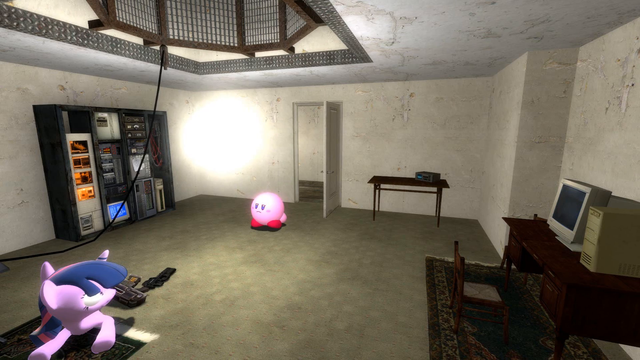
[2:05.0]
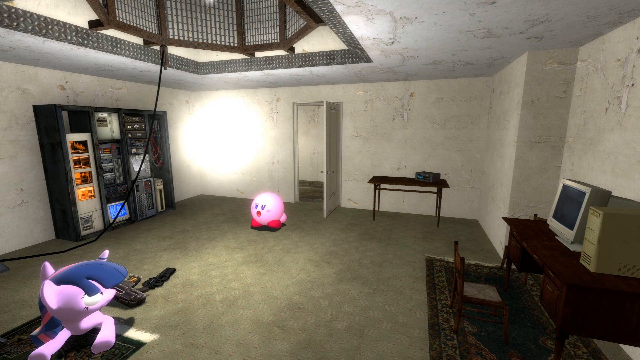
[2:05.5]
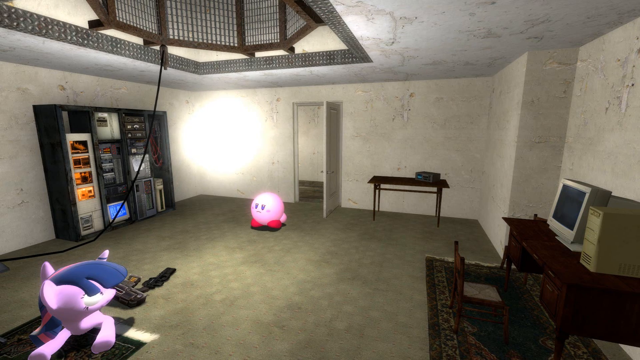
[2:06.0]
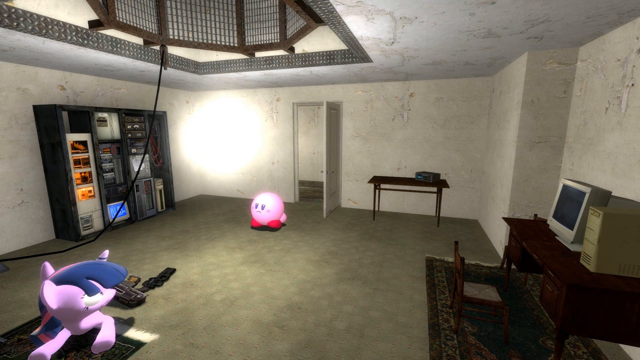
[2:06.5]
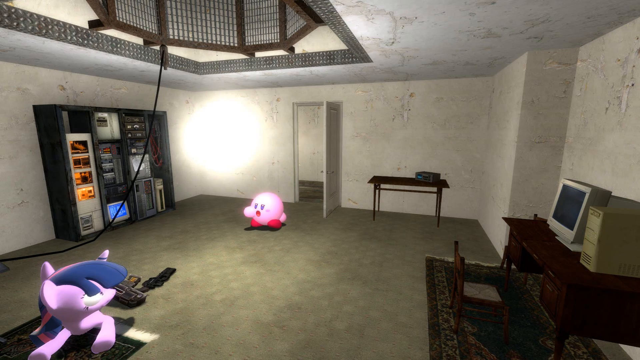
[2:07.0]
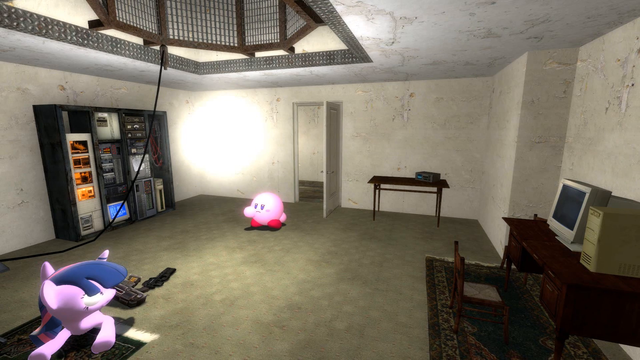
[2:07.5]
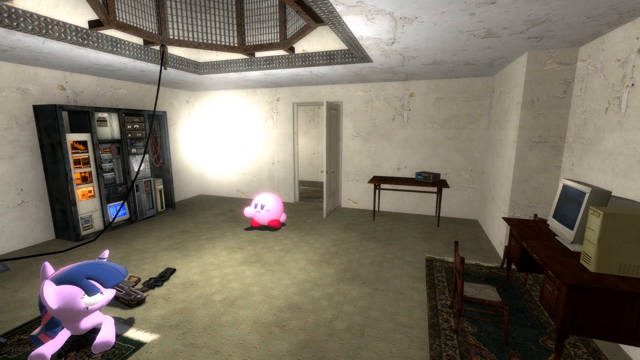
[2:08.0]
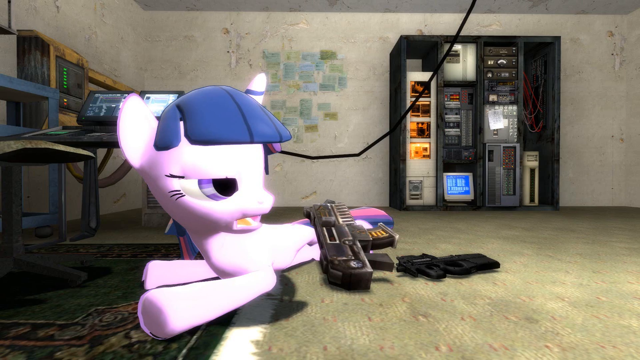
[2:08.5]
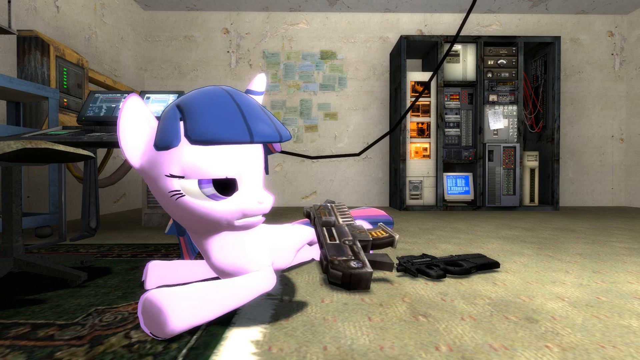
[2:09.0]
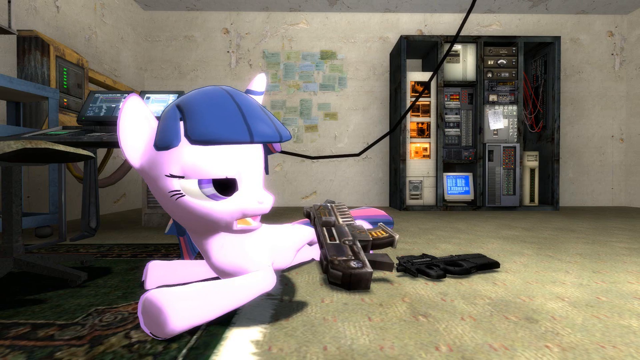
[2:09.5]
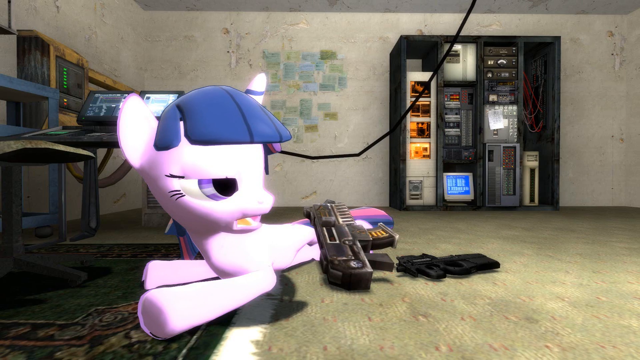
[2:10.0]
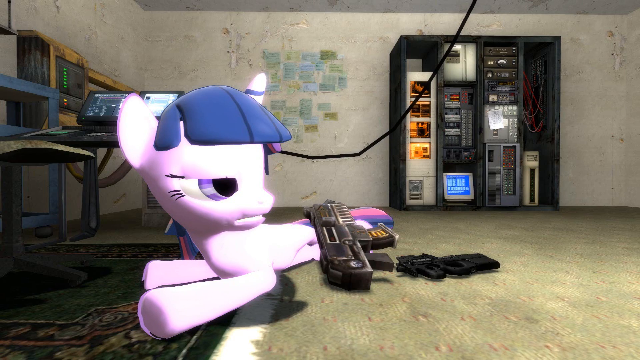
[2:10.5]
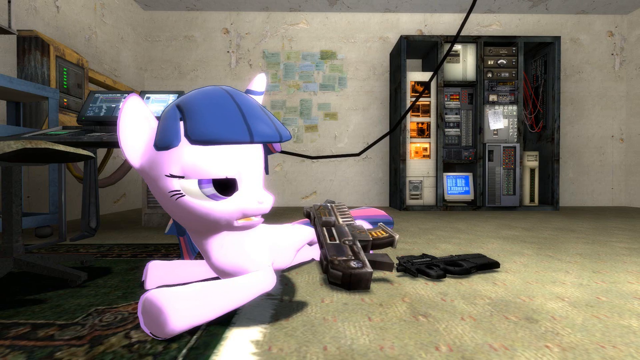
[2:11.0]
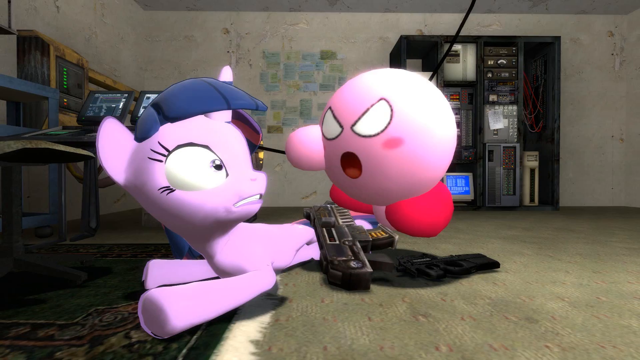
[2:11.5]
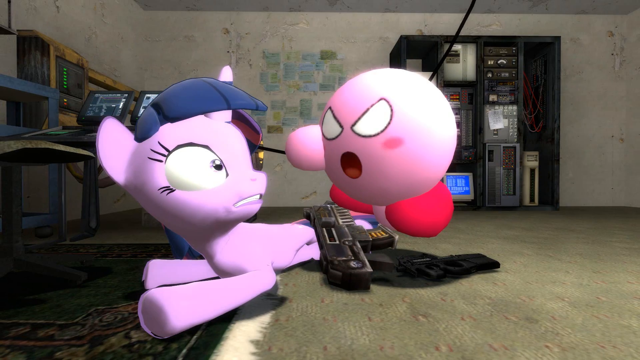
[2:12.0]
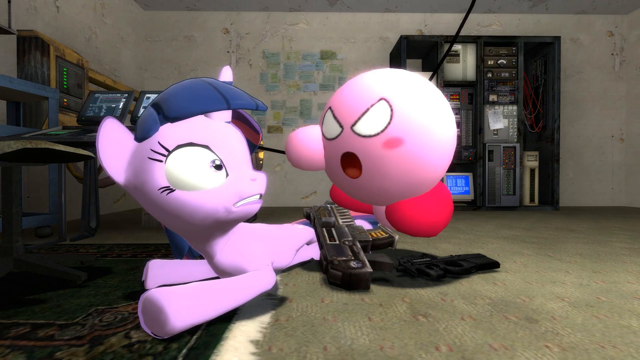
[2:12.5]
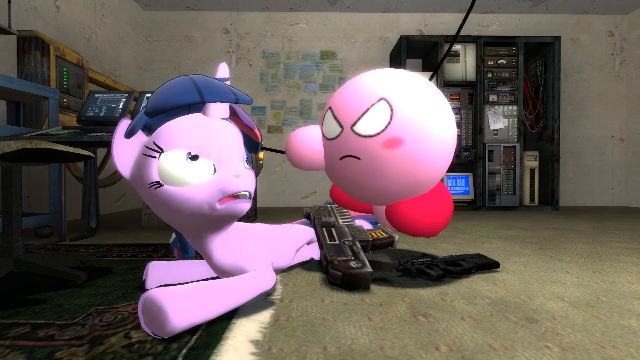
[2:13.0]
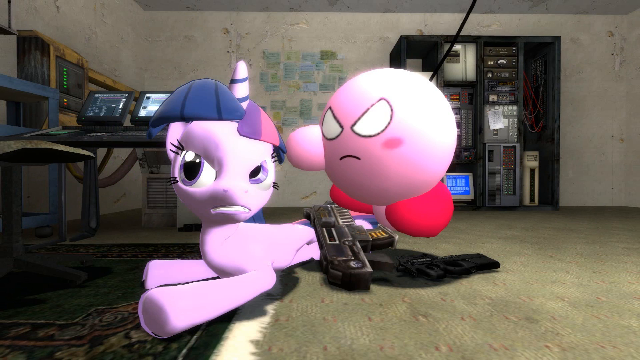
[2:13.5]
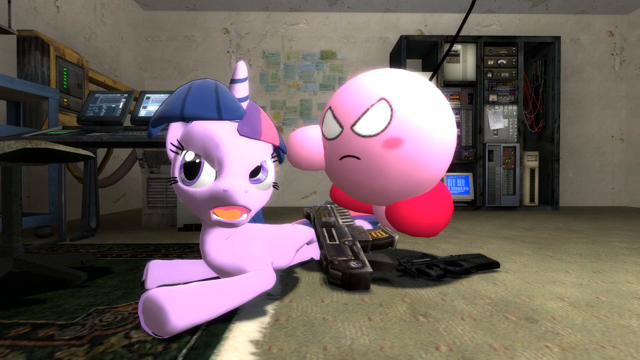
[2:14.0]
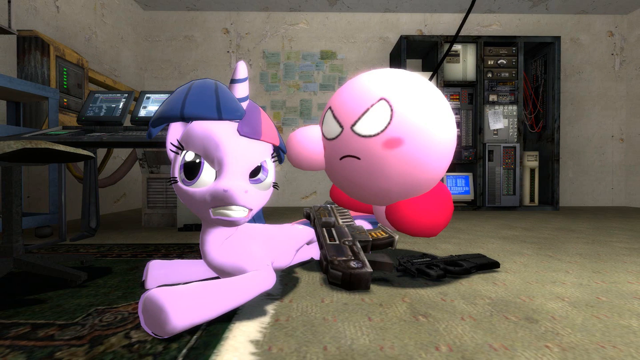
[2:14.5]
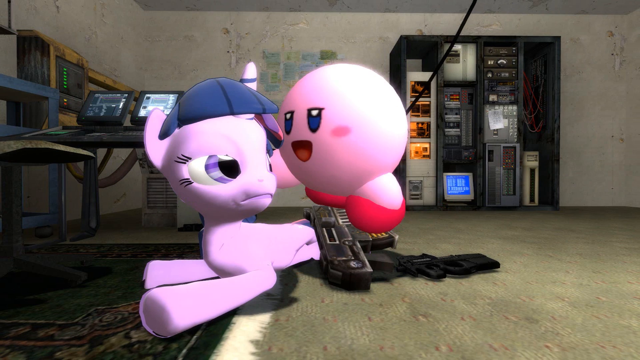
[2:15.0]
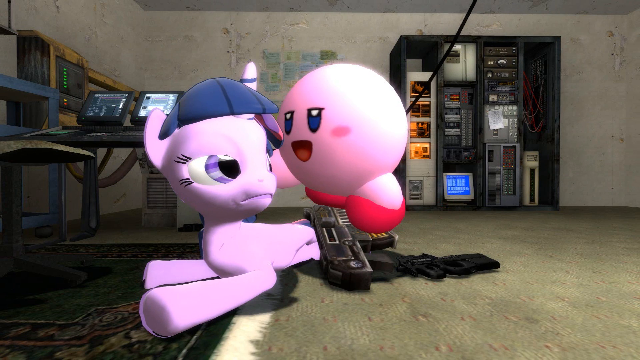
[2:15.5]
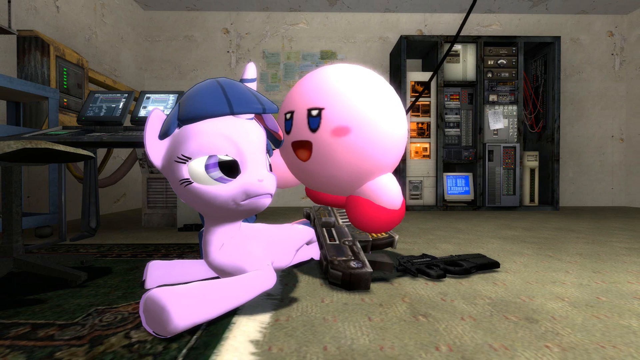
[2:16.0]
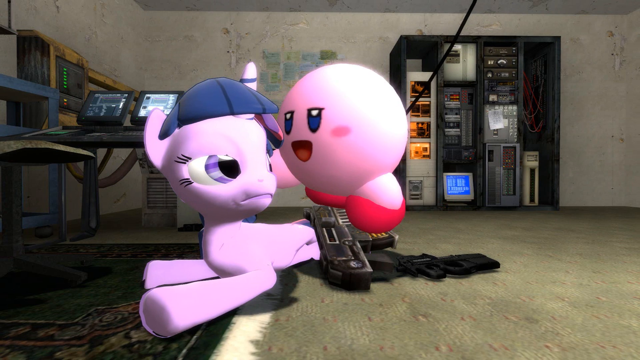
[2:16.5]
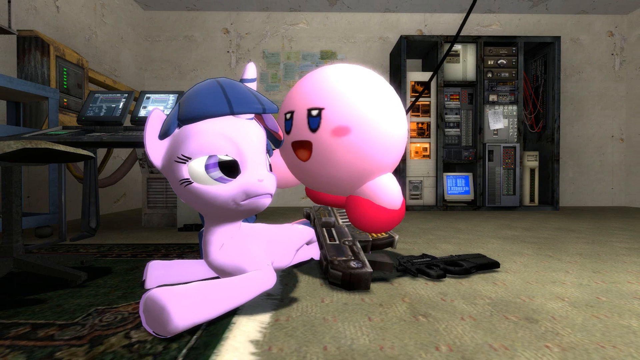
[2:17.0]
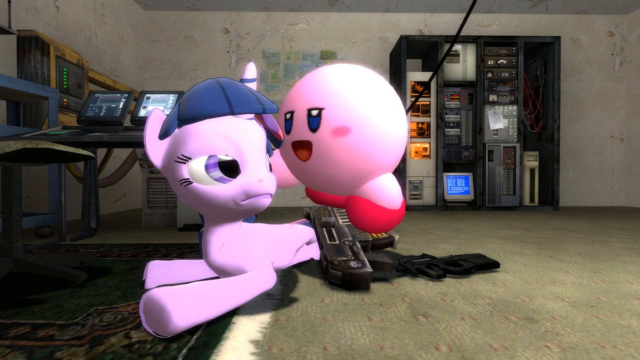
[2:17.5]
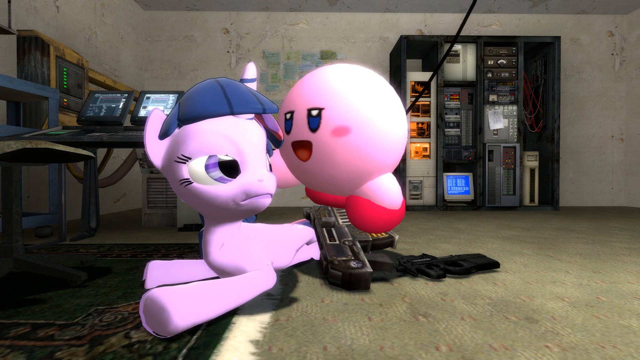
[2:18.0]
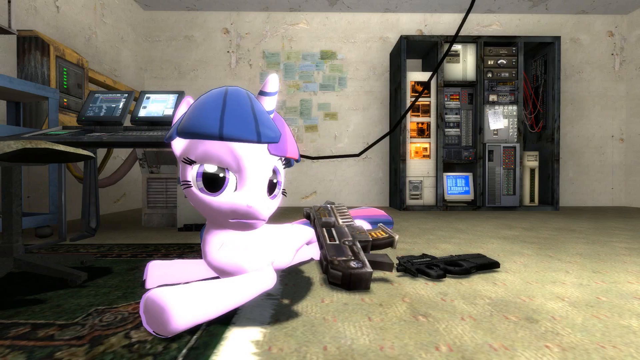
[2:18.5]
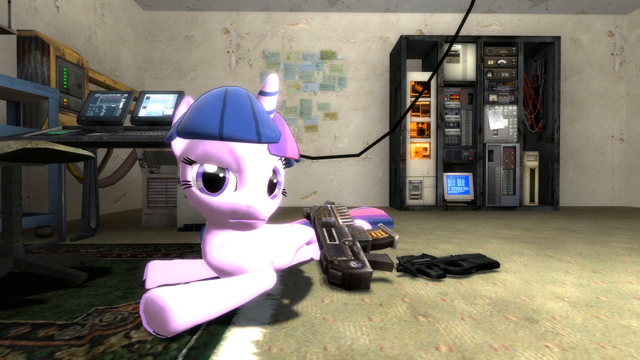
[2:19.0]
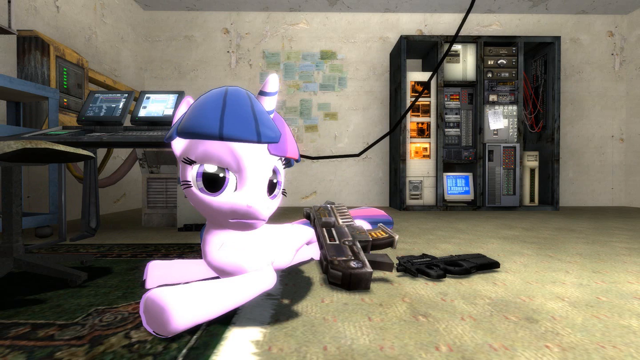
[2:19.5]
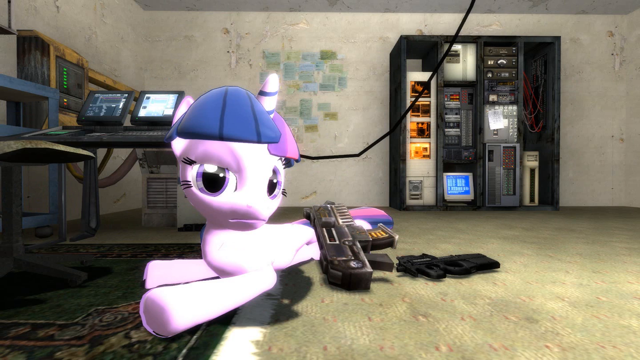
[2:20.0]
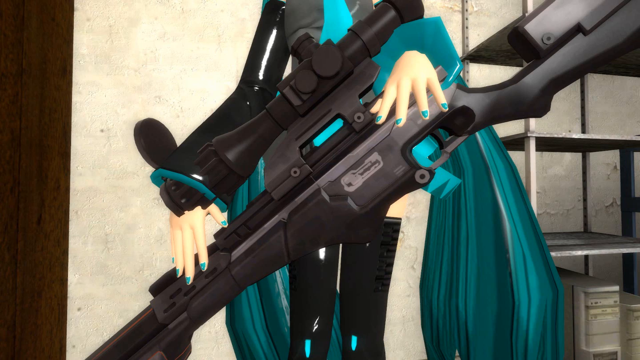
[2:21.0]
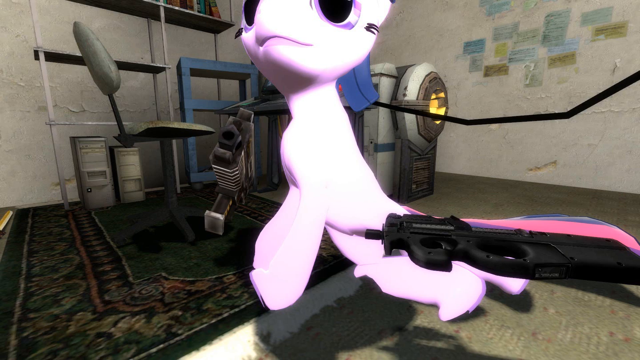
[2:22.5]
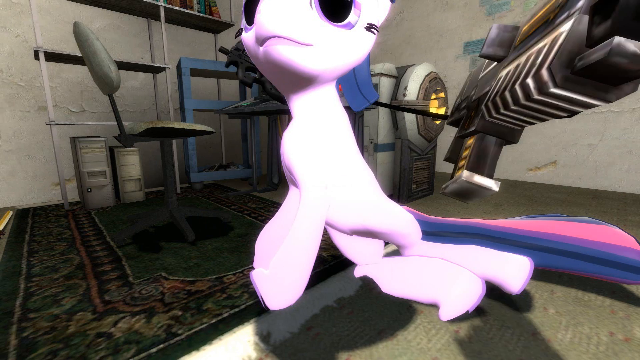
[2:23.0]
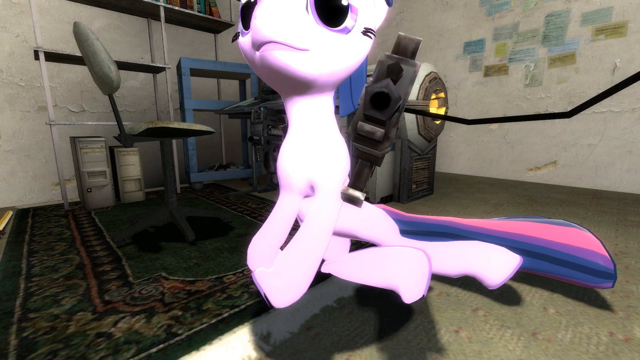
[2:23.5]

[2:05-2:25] In the room, the little pink guy and the horse talk back and forth. Something unidentified lies on top of the horse. The princess appears to have a gun in her hand and may be holding the little horse hostage; the horse might be tied up, and the gun appears to be lying on top of it. The little pink horse has cute little eyelashes. The princess does something, and the fireball is in the room. The horse continues to talk to the pink guy, who looks angry. The computer equipment is visible. The princess stands with the gun in her hand, wearing very tall black boots; her face is not visible, but she has very long bluish pigtails. The horse-like animal looks very sad.